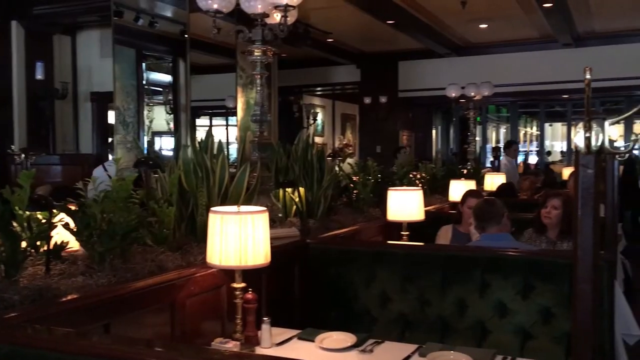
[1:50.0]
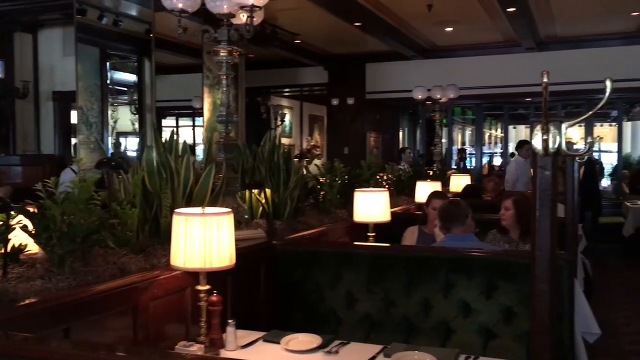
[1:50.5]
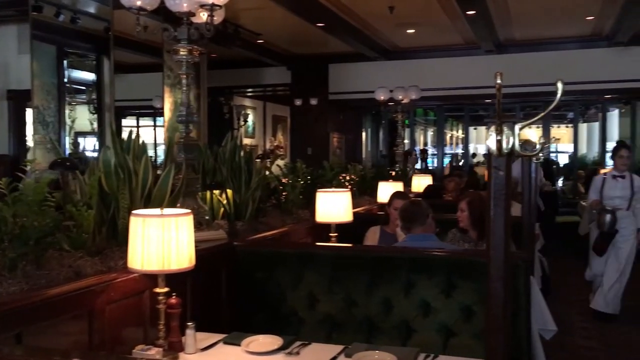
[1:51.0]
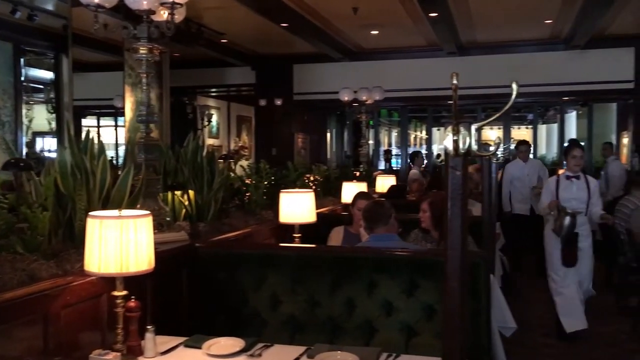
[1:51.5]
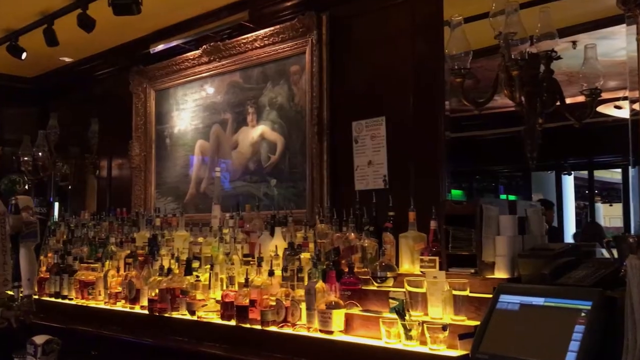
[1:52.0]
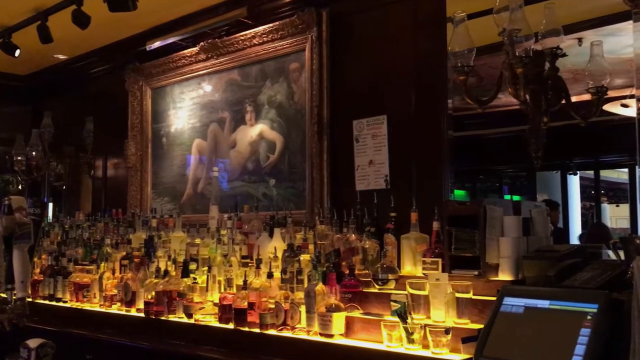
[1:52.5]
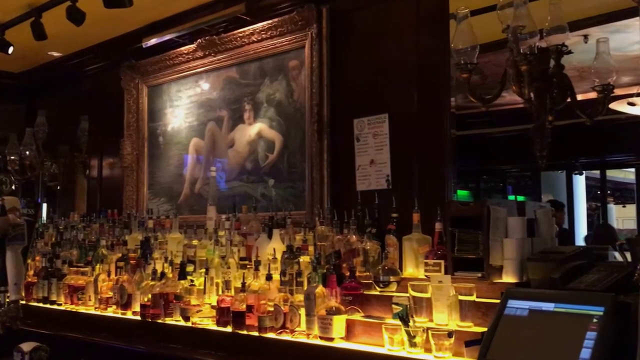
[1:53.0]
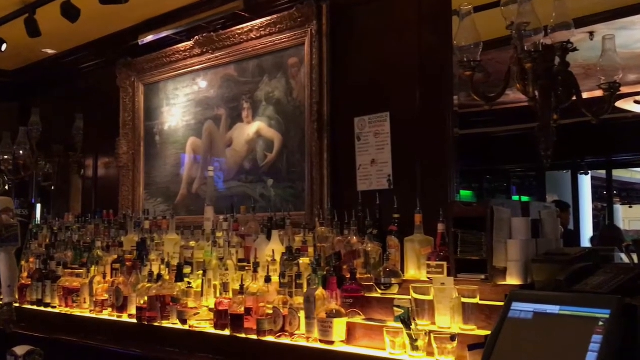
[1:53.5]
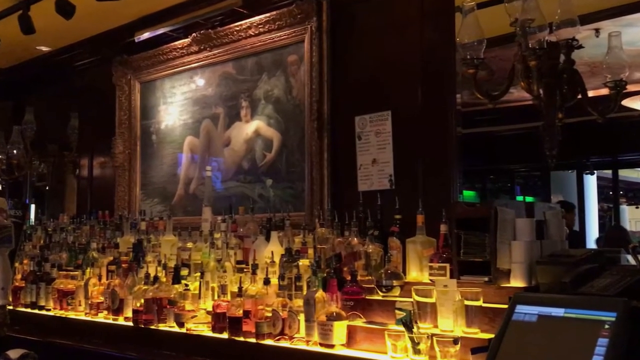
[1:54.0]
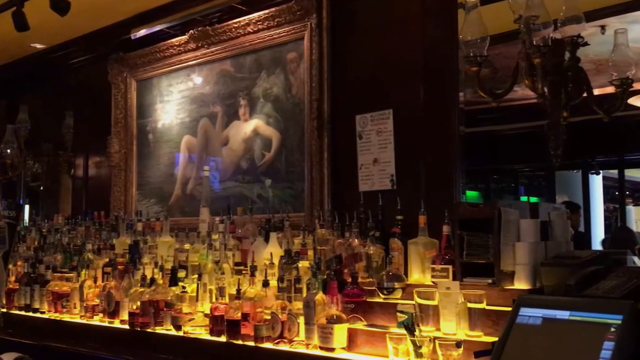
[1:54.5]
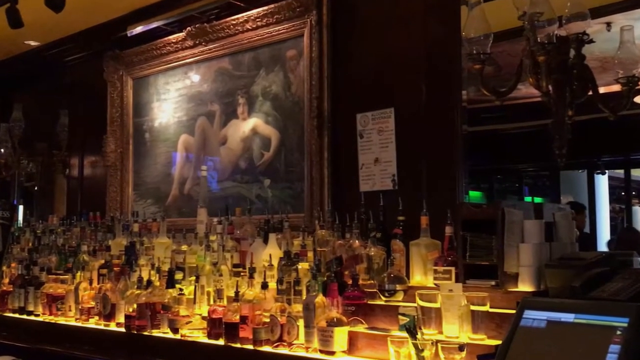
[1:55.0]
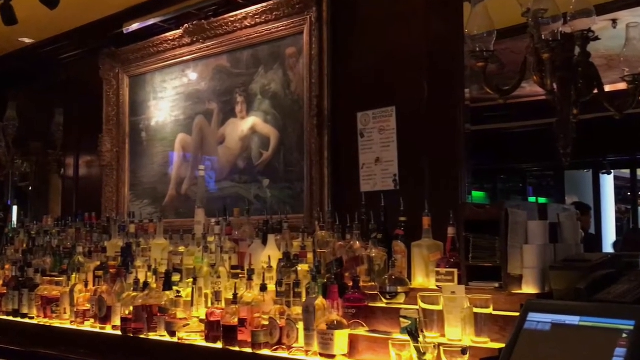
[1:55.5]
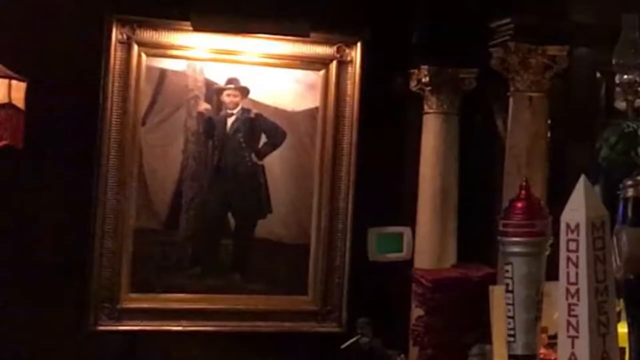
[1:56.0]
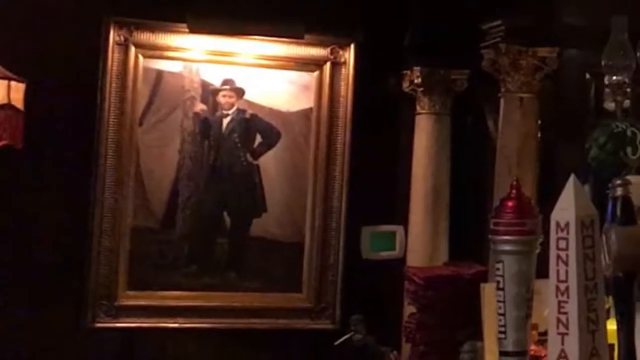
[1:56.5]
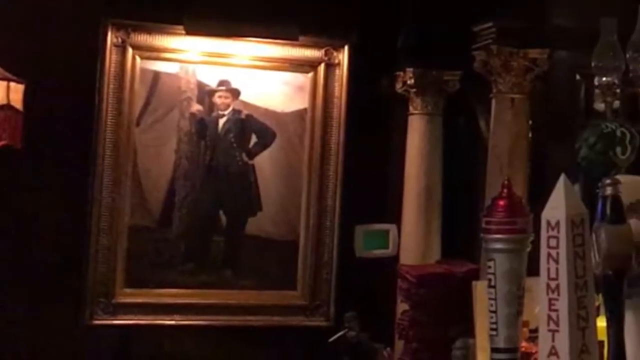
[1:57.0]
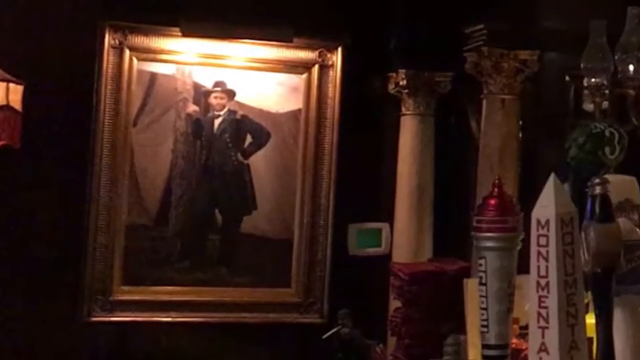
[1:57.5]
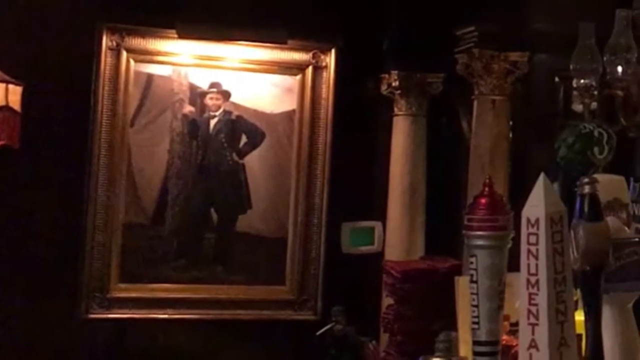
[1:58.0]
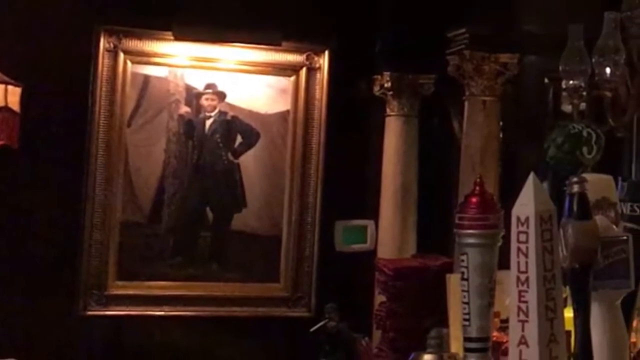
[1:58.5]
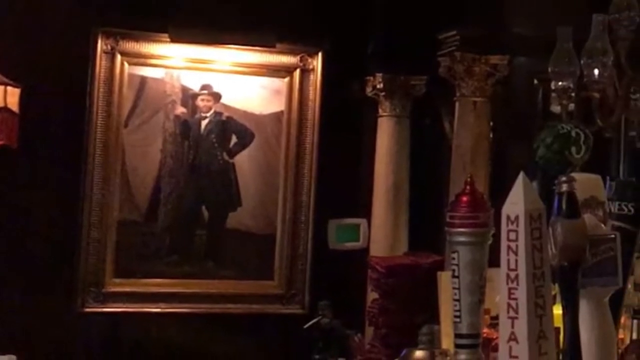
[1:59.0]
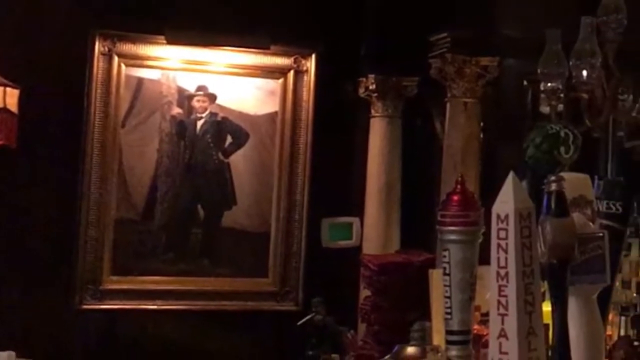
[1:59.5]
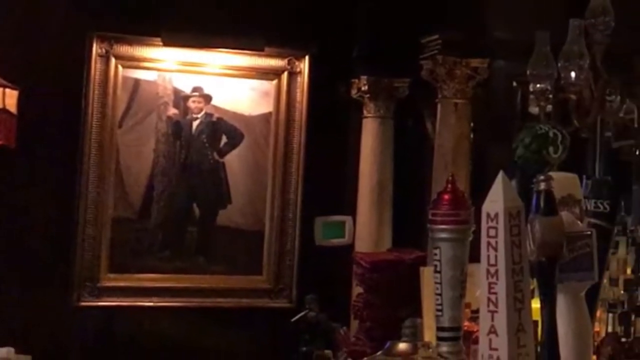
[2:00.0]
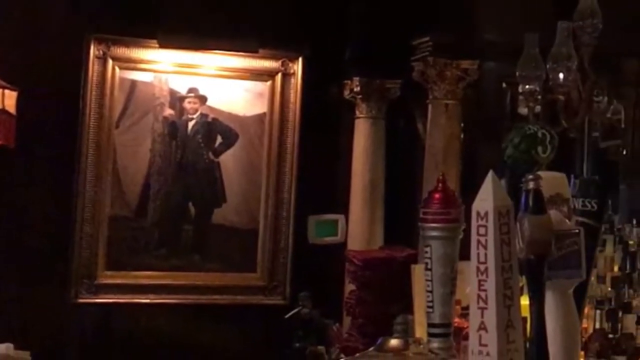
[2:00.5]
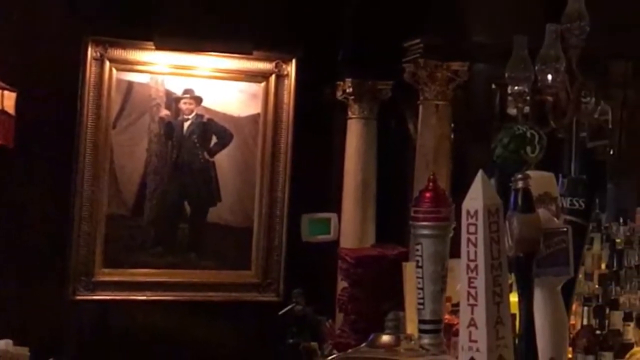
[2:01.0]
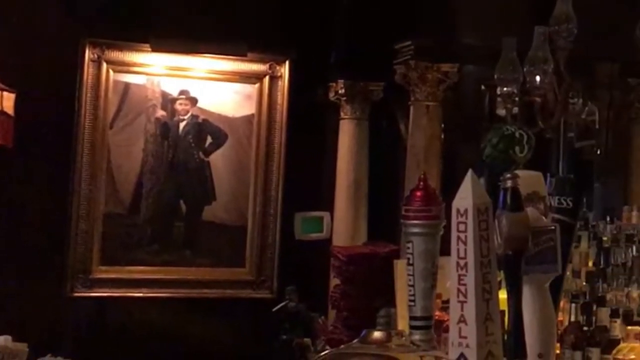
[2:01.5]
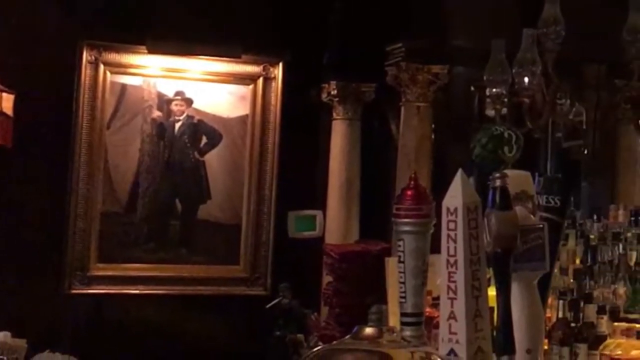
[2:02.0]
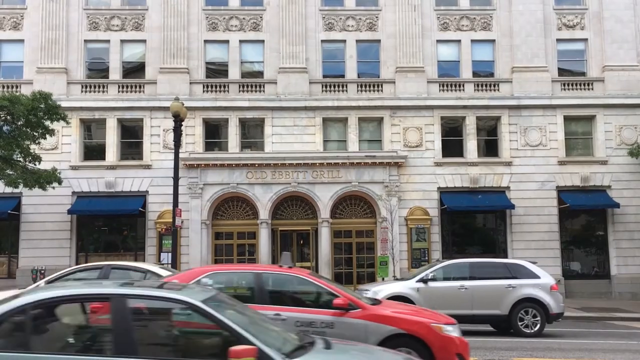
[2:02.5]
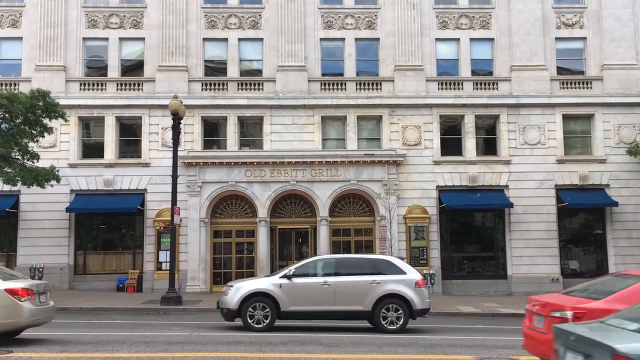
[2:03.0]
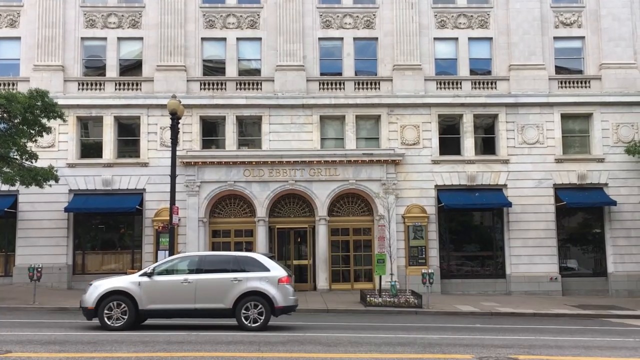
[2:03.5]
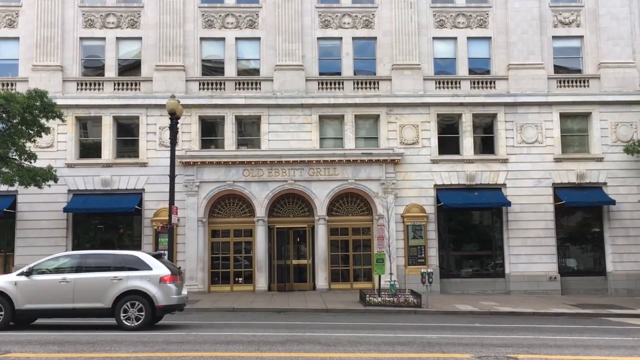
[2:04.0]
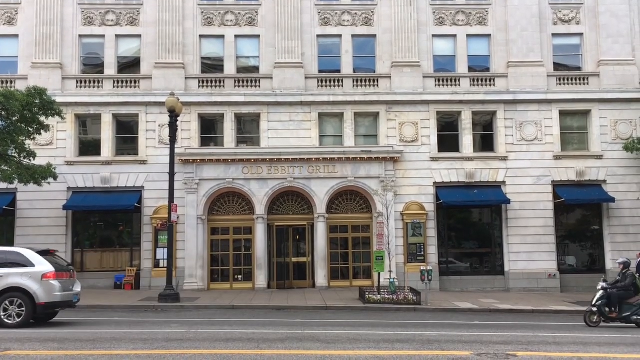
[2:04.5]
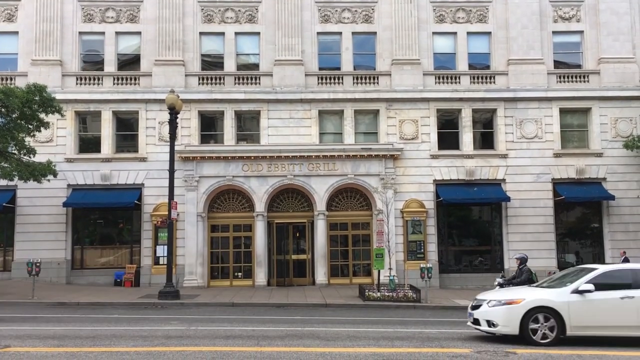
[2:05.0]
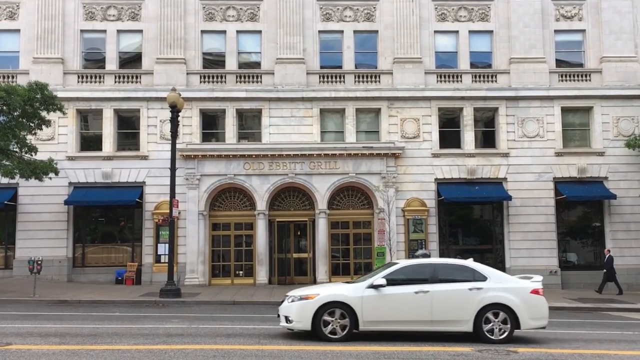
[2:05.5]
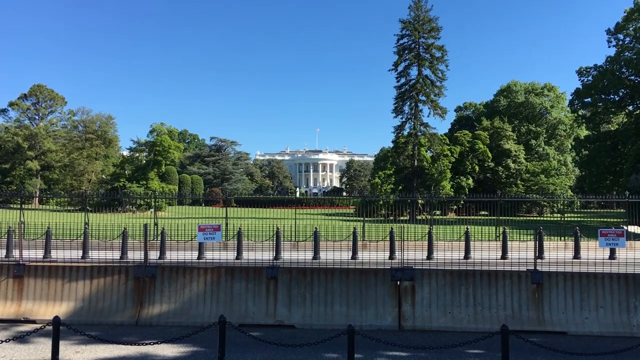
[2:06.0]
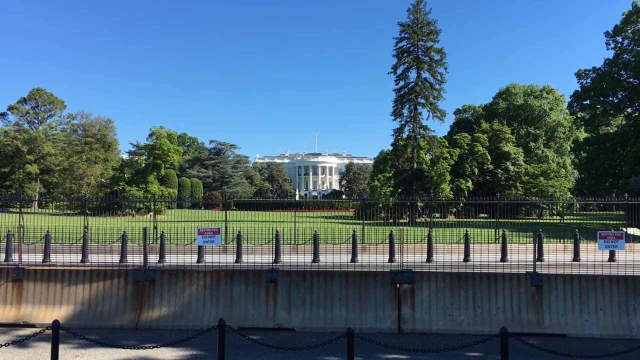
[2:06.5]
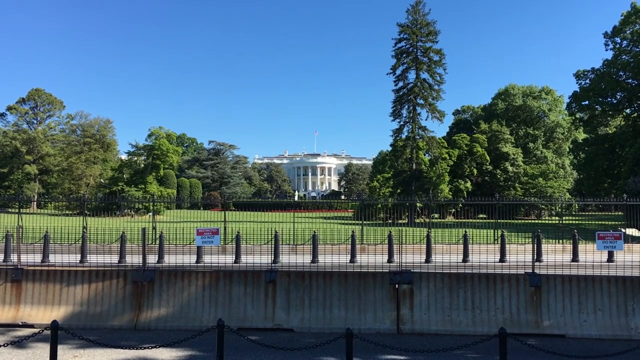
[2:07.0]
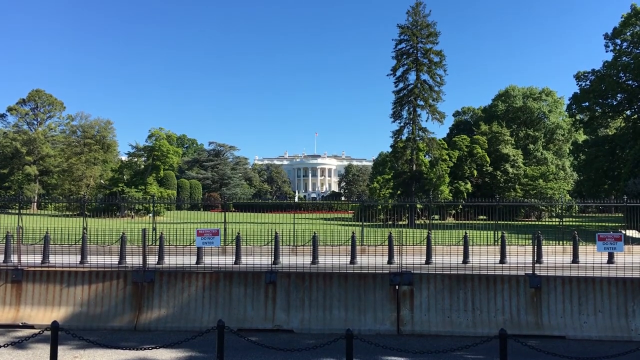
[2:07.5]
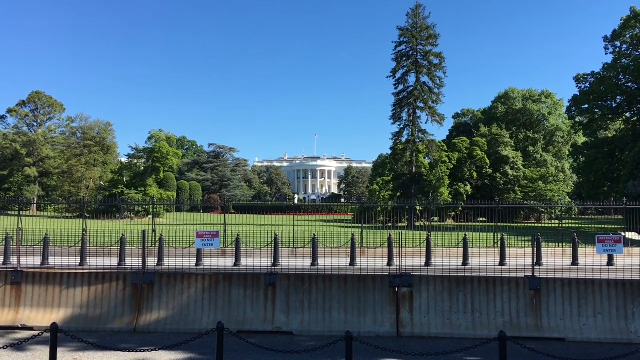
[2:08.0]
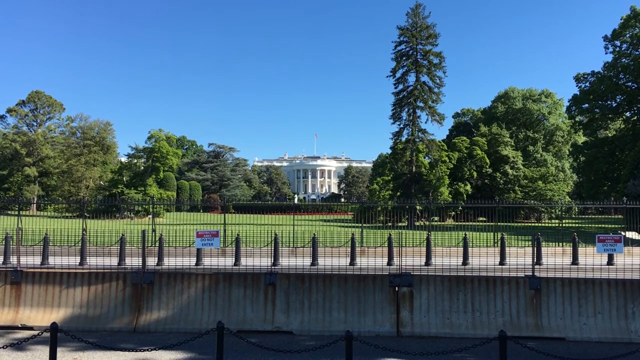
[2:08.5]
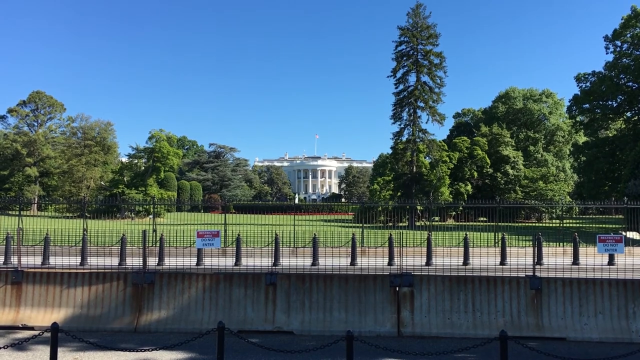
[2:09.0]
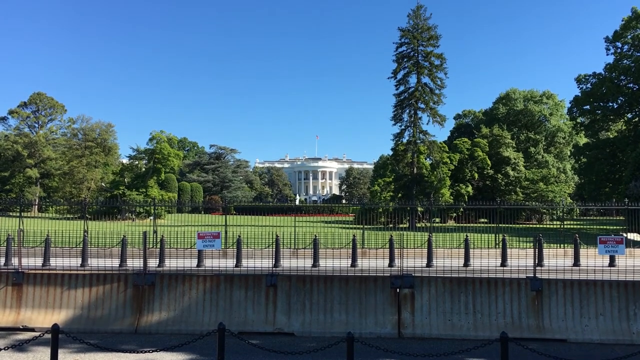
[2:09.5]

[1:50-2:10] The decor continues to be shown and seems very elaborate. The video then goes to the exterior of the White House, seen from a far distance between the trees, apparently from the street looking in. Some cars are driving by, and an iron fence separates the public from the White House. There is a lot of greenery from the trees and the grass, so it looks like spring or summer.